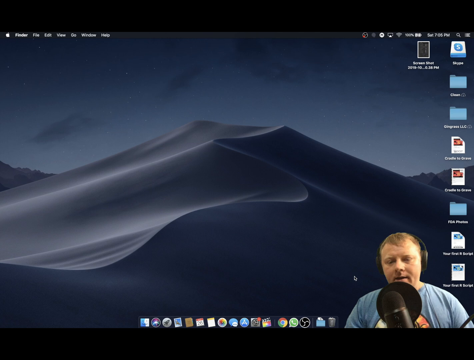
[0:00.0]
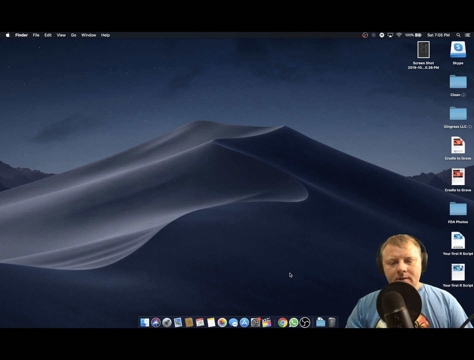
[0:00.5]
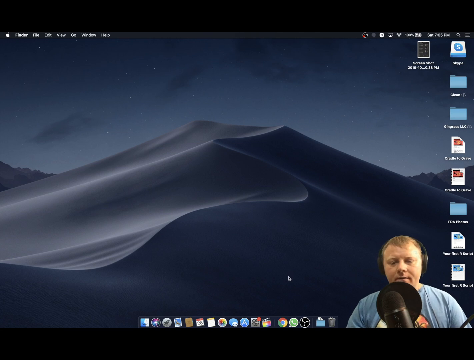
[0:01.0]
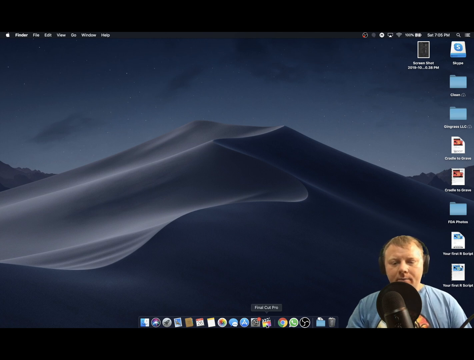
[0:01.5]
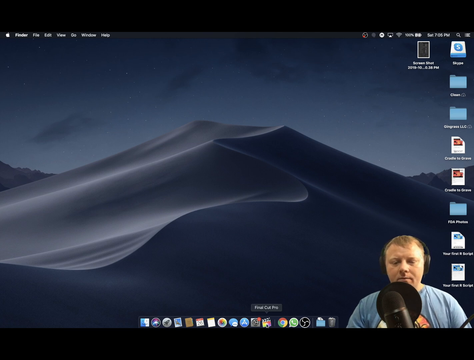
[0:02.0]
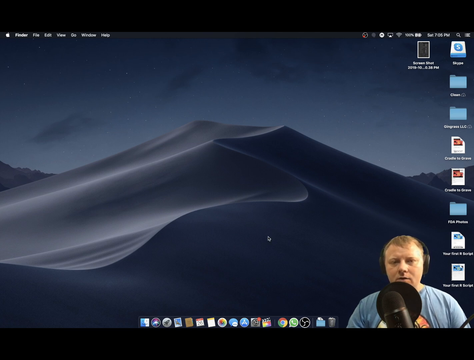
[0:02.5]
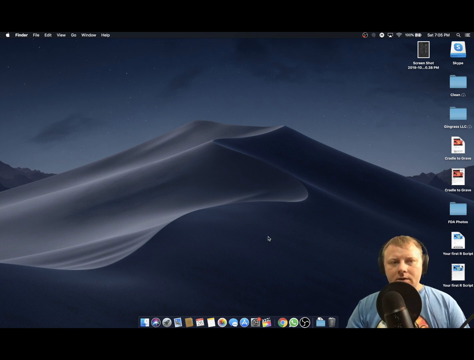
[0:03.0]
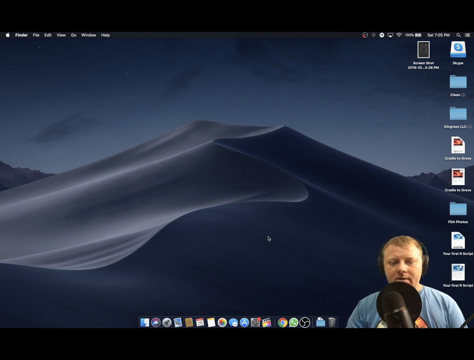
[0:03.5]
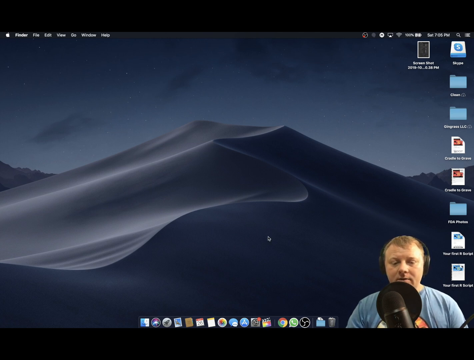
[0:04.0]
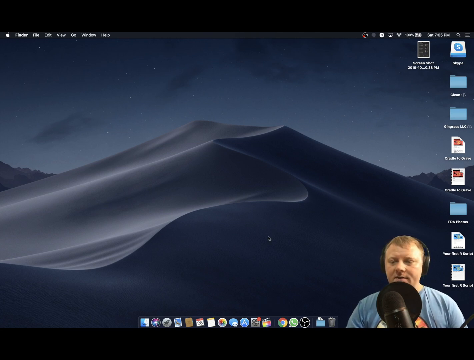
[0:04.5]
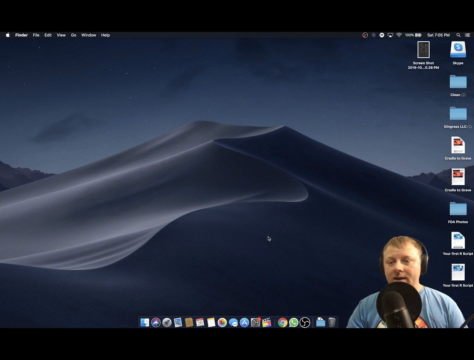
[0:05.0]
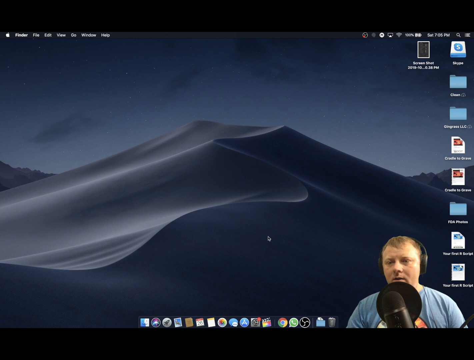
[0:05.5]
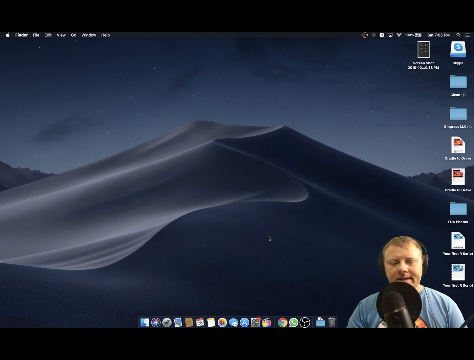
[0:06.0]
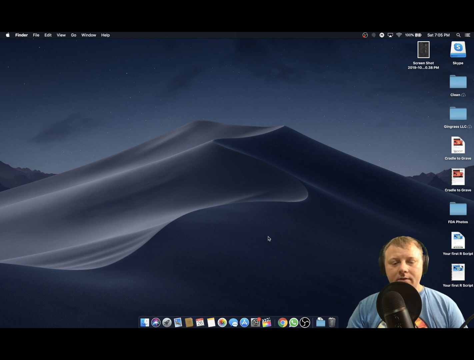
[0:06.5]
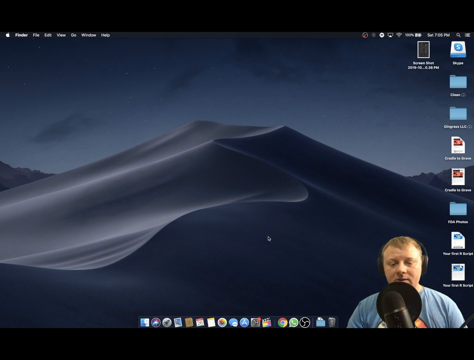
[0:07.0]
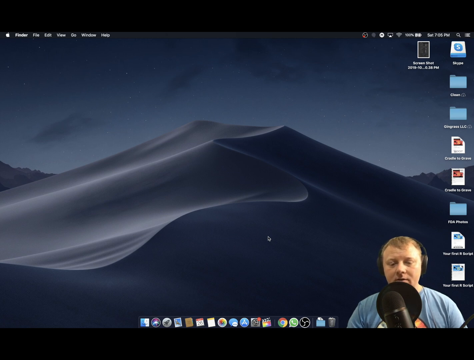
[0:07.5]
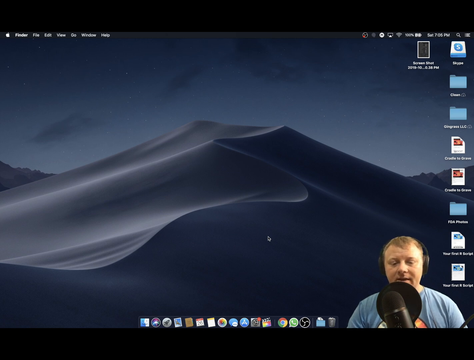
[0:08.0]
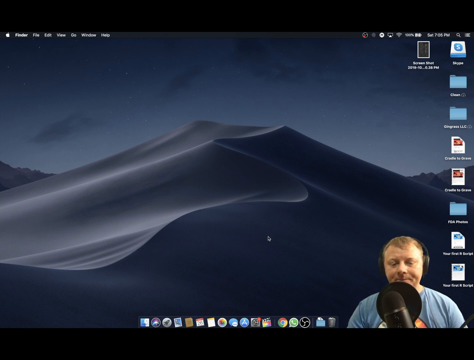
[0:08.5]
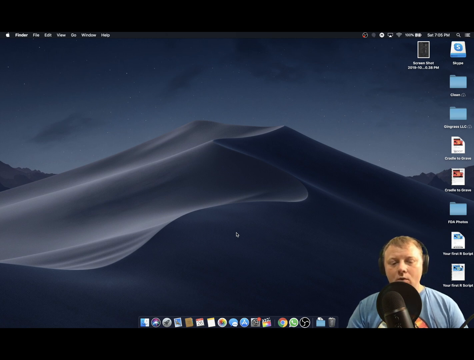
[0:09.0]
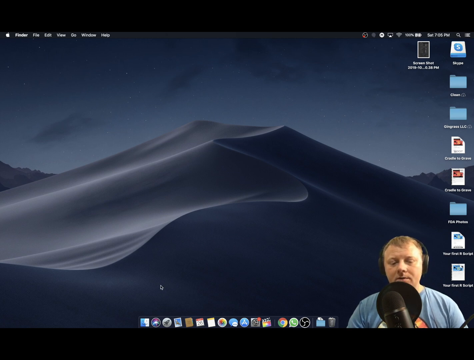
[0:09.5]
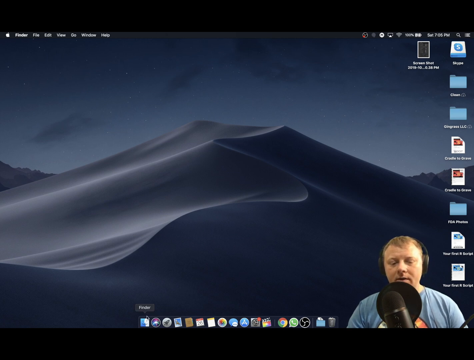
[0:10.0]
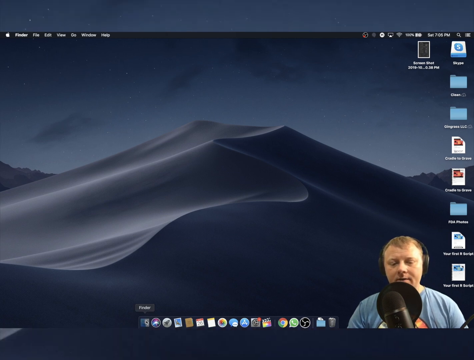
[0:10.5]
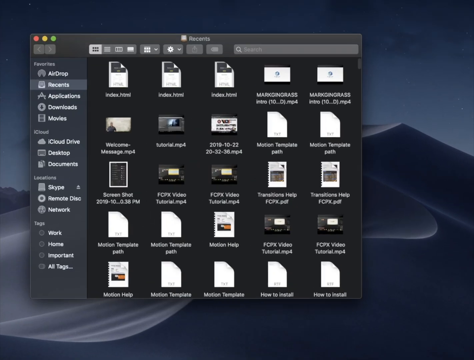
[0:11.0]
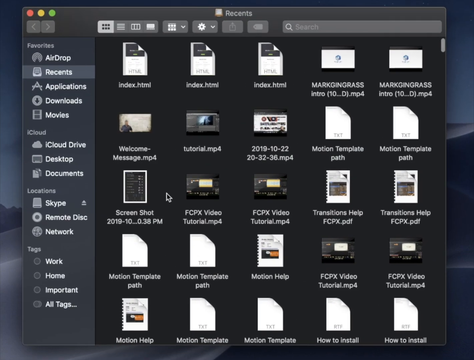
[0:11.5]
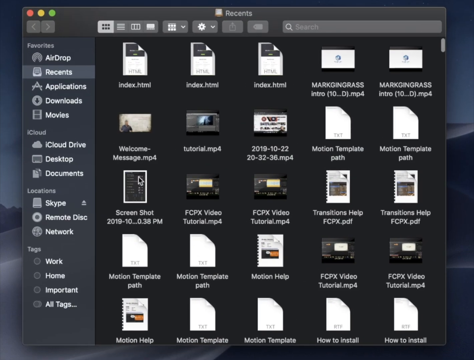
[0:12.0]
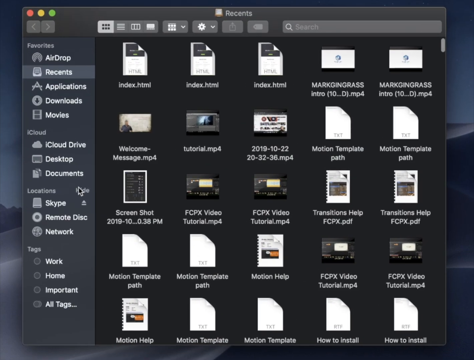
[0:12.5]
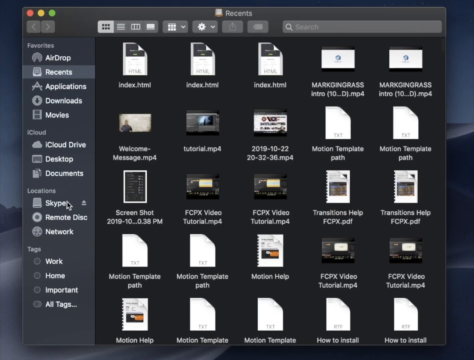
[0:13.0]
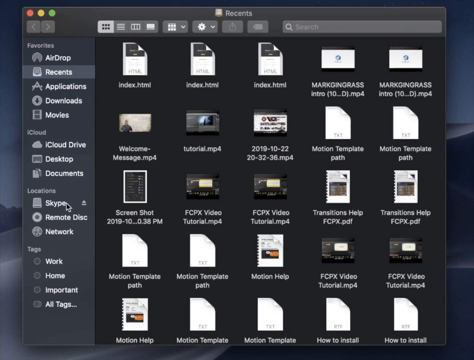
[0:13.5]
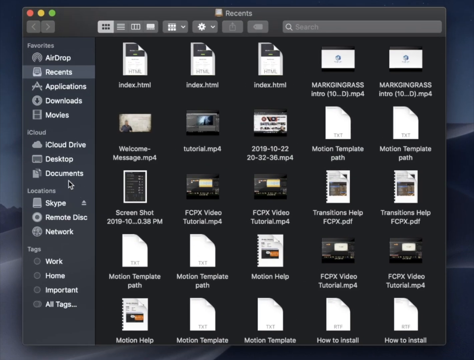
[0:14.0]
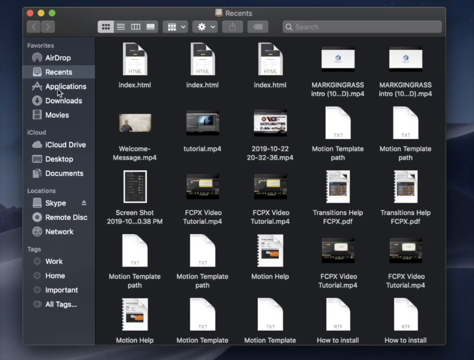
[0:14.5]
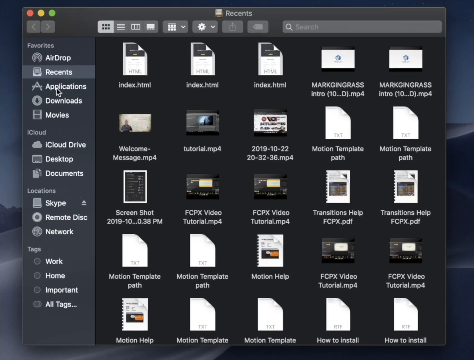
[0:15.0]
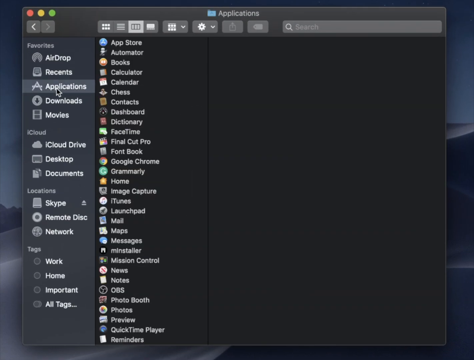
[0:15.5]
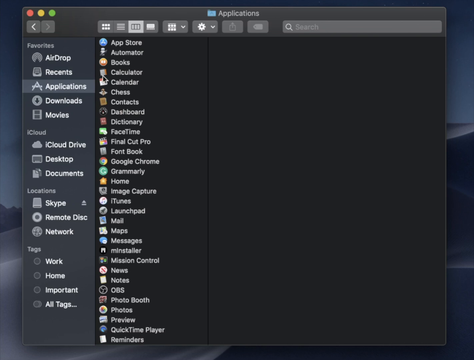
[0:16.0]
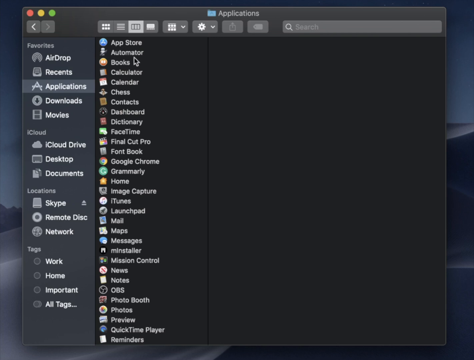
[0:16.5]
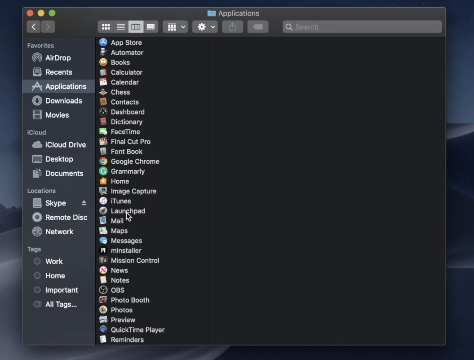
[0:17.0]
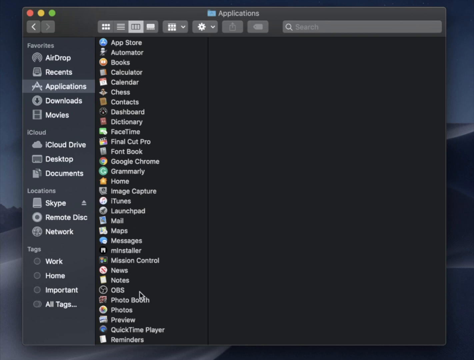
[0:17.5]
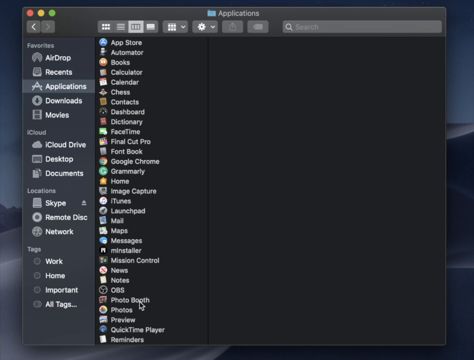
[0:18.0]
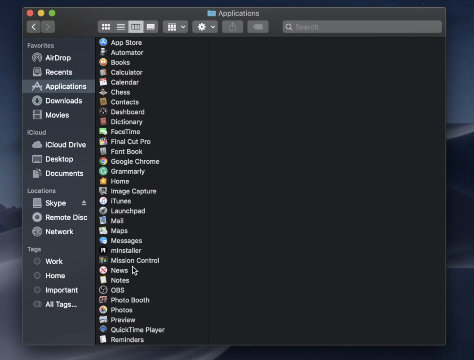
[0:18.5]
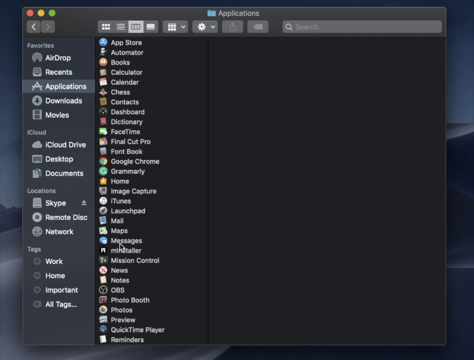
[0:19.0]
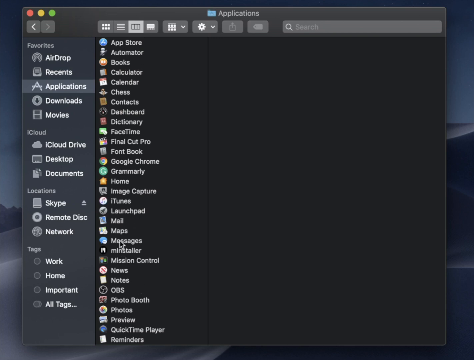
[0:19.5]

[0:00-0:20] What seems to be a podcast or tutorial shows a white man with blonde or light brown hair, wearing a light blue t-shirt or maybe another tone of blue, teaching something involving macOS. He wears black headphones and has a podcast microphone in front of him with a pop filter in front of the microphone. His image is in the bottom right corner of the screen while he shows instructions for clicking somewhere. His desktop is visible, with three folders, four files, possibly screenshots, and what appears to be either an application file or a drive. The desktop wallpaper is like a snowy or sandy mountain, and it is unclear whether it is real or computer-generated. He clicks in Finder, where his recent files are visible, then clicks Applications, goes to Messages and clicks on it.